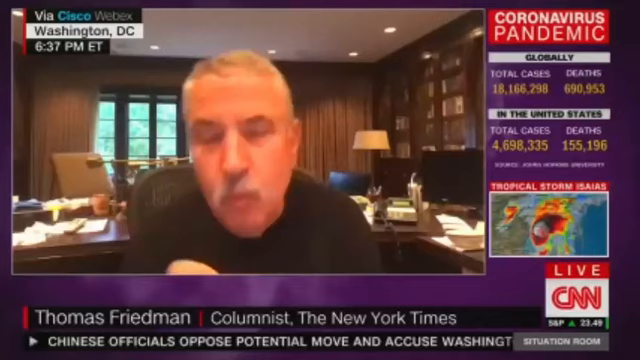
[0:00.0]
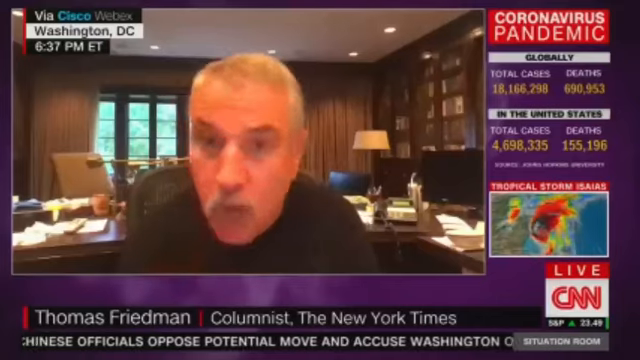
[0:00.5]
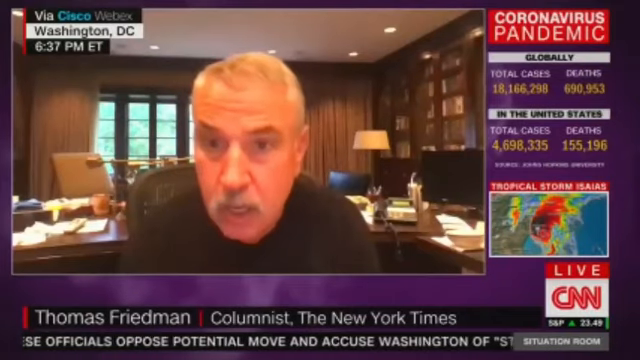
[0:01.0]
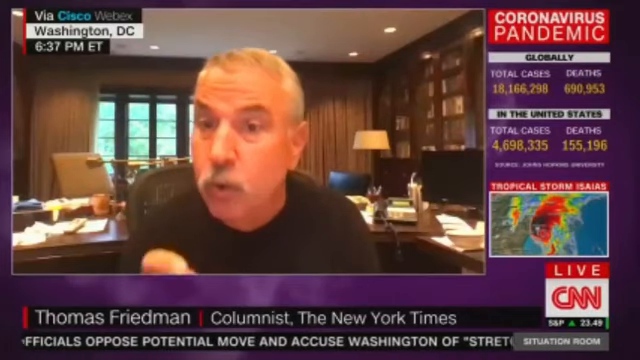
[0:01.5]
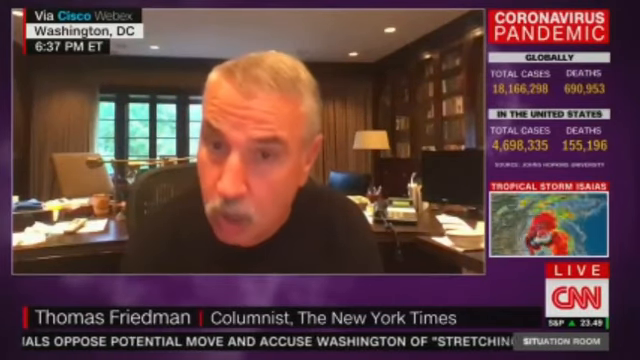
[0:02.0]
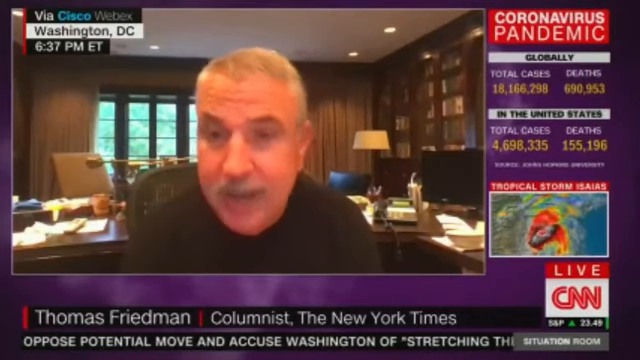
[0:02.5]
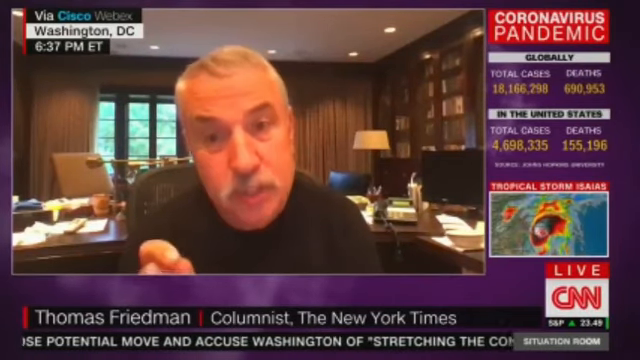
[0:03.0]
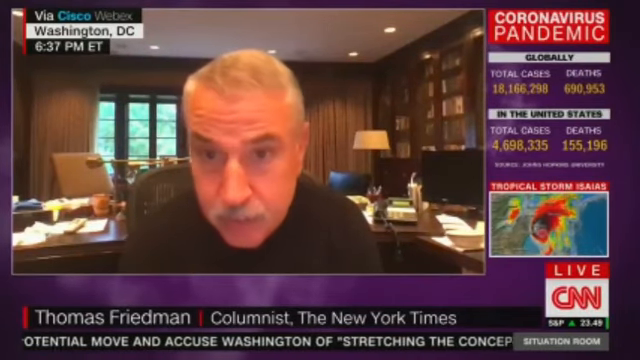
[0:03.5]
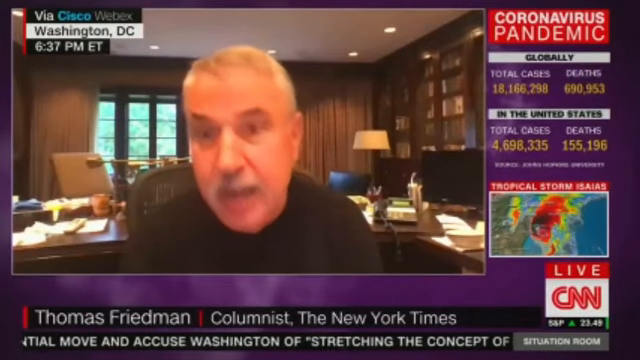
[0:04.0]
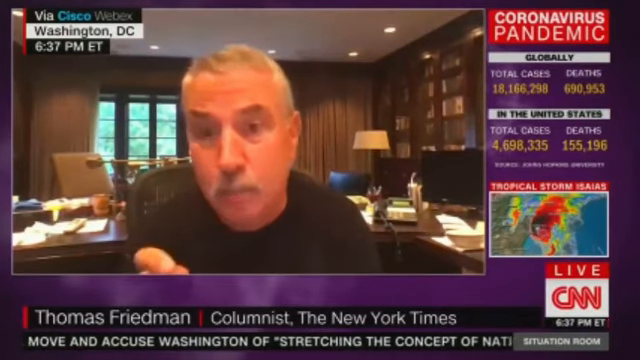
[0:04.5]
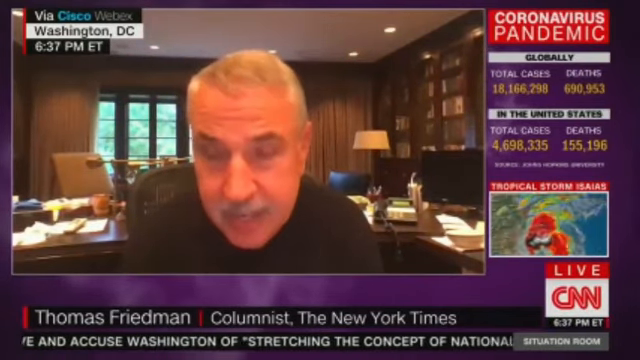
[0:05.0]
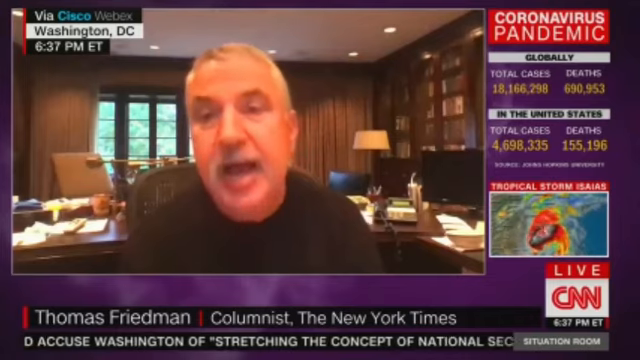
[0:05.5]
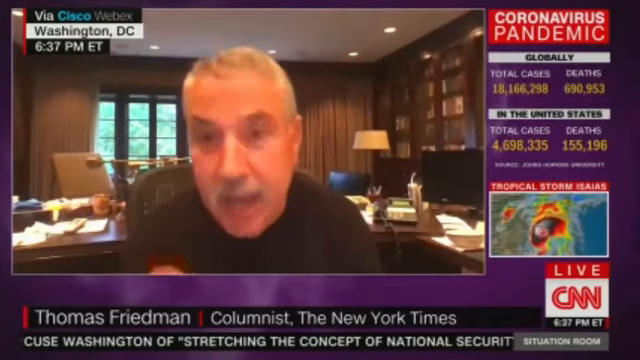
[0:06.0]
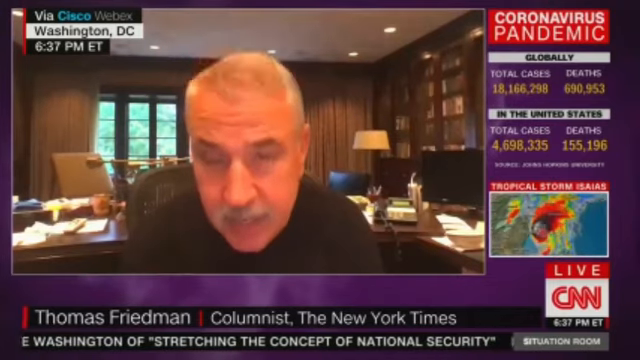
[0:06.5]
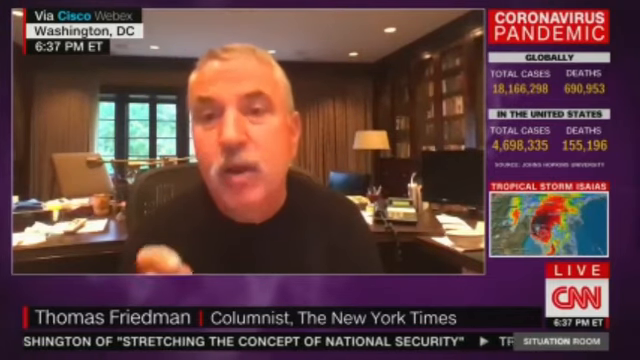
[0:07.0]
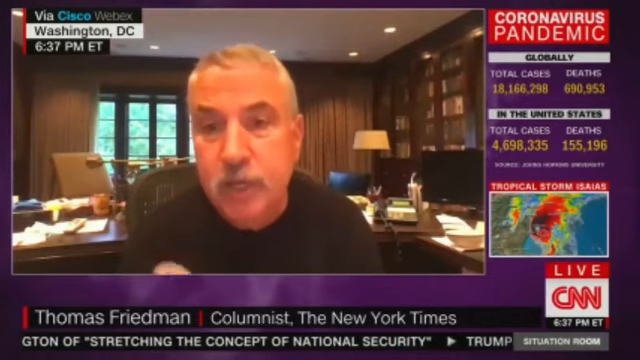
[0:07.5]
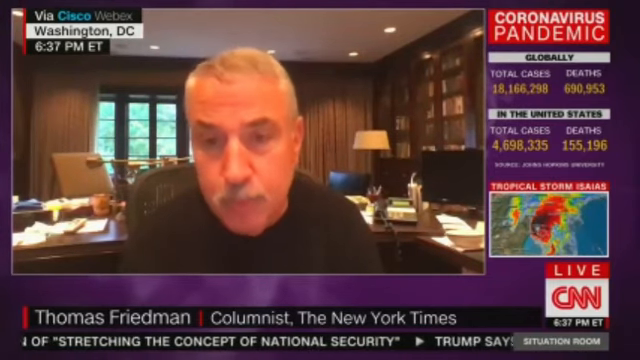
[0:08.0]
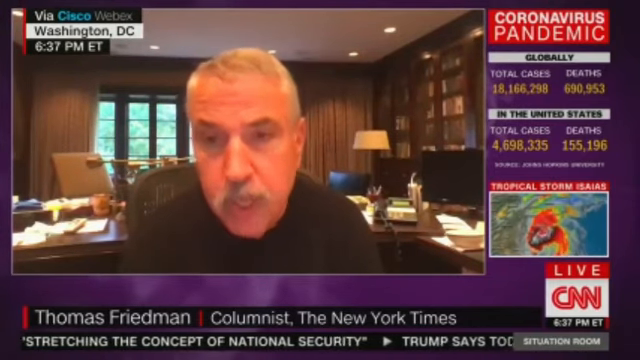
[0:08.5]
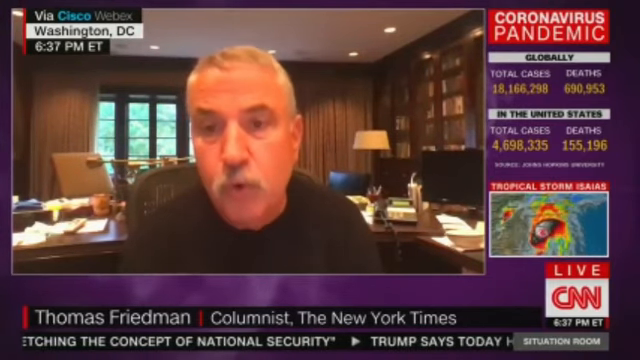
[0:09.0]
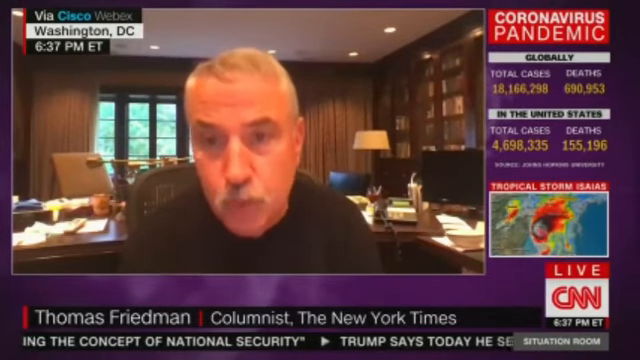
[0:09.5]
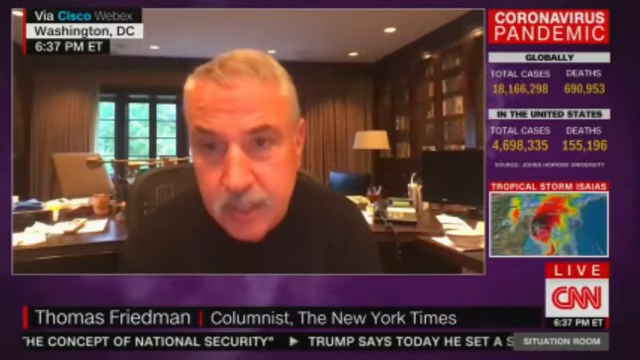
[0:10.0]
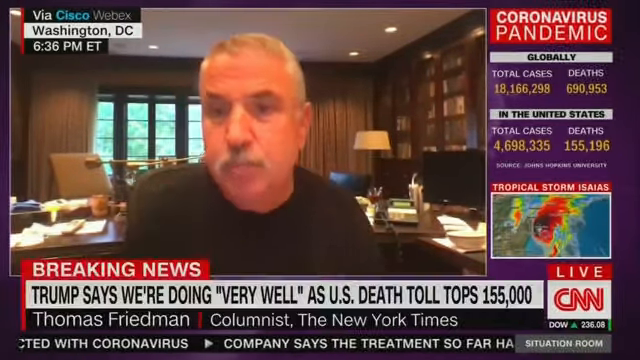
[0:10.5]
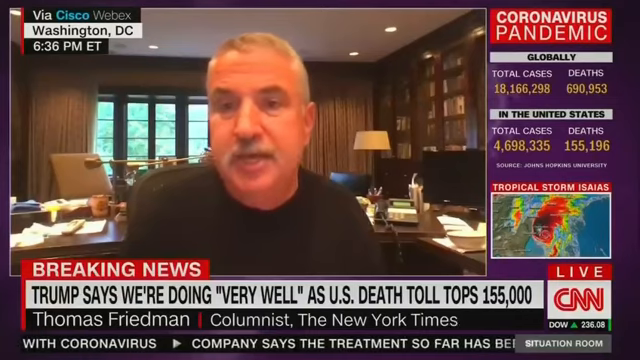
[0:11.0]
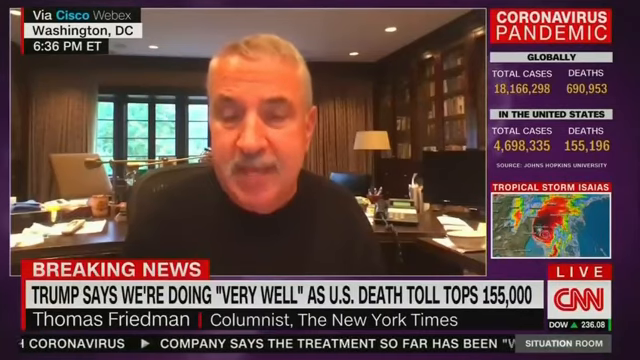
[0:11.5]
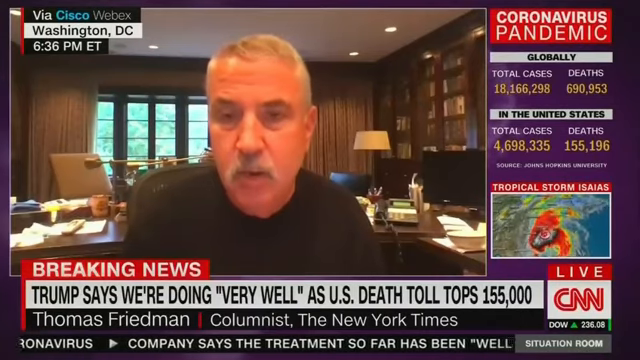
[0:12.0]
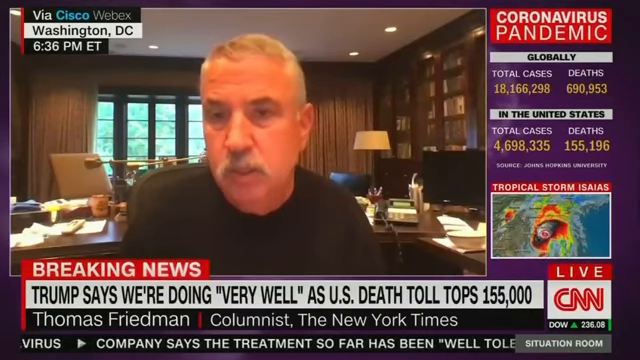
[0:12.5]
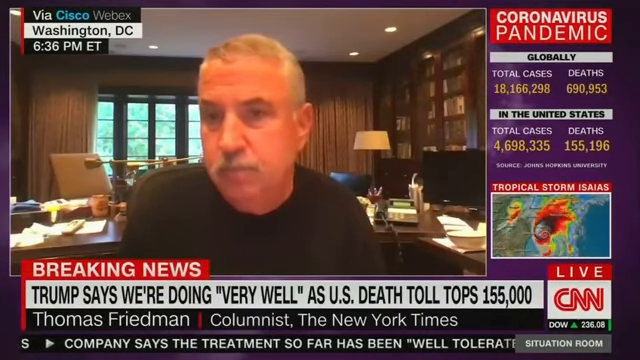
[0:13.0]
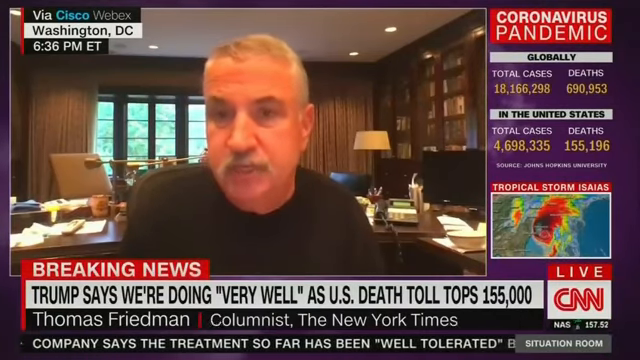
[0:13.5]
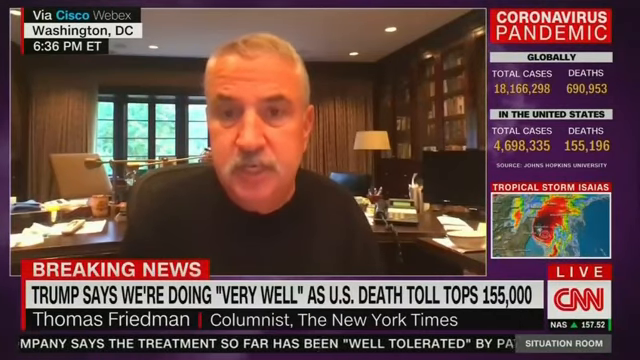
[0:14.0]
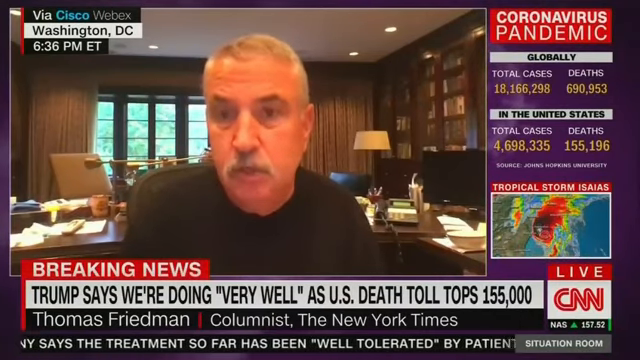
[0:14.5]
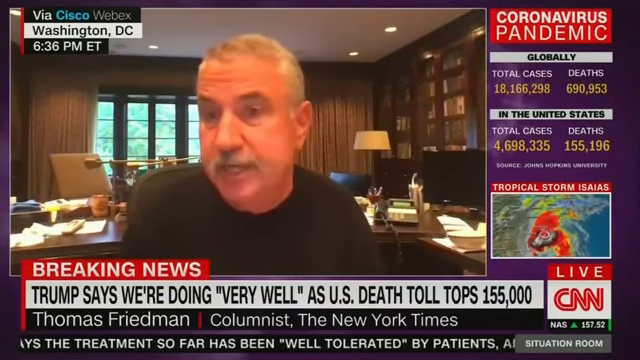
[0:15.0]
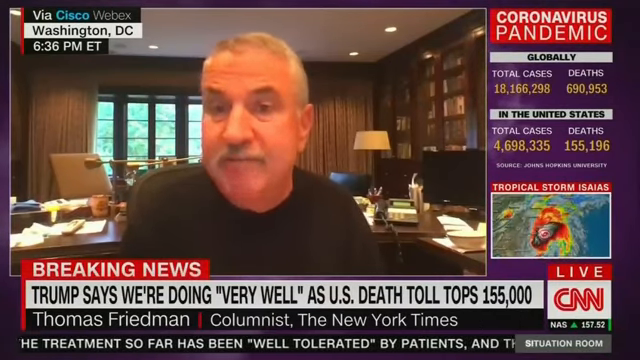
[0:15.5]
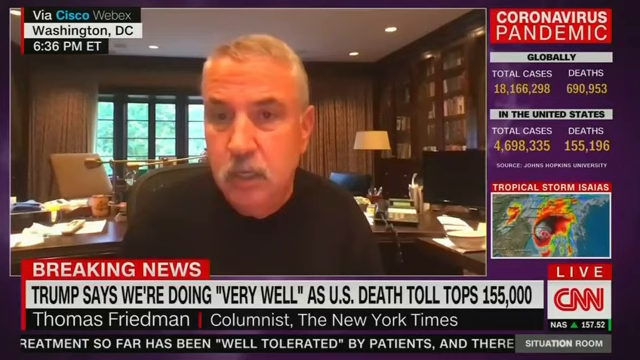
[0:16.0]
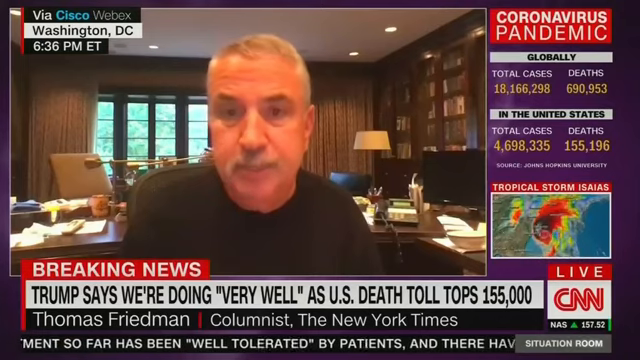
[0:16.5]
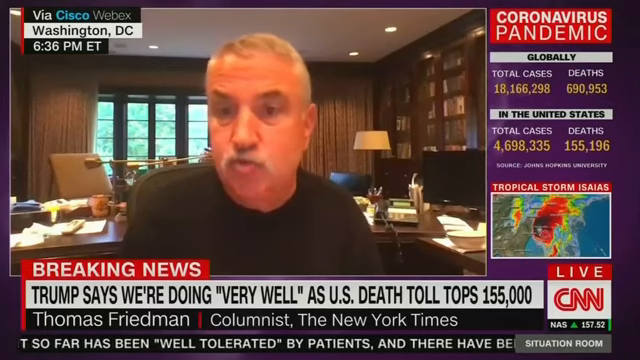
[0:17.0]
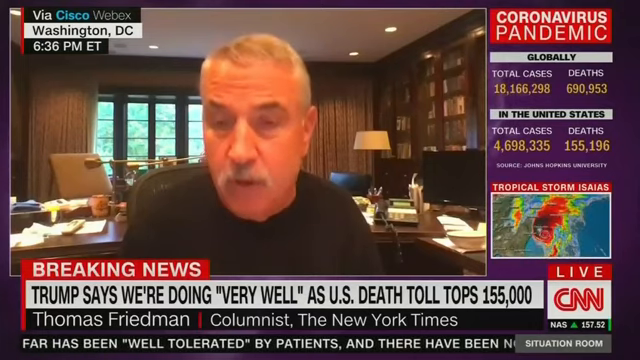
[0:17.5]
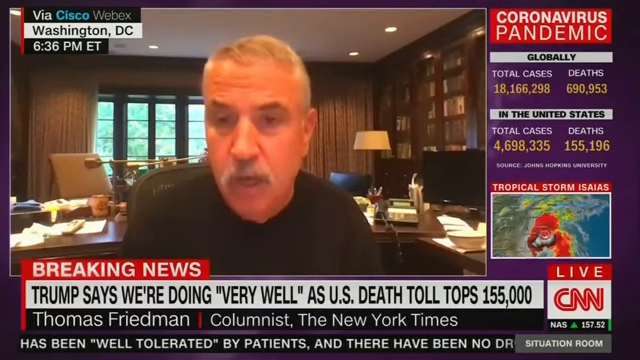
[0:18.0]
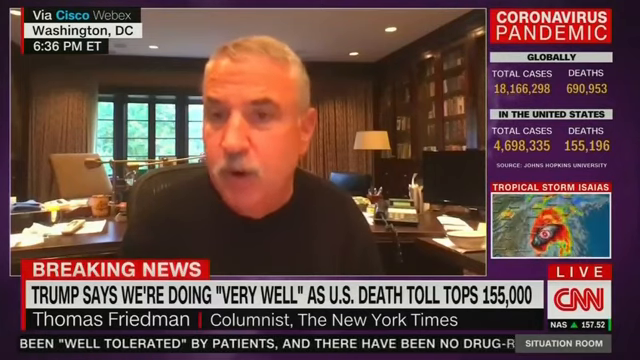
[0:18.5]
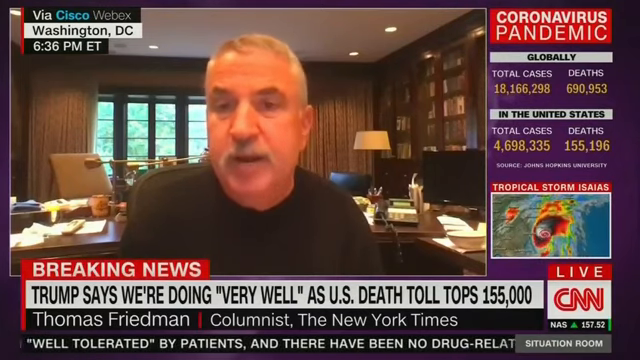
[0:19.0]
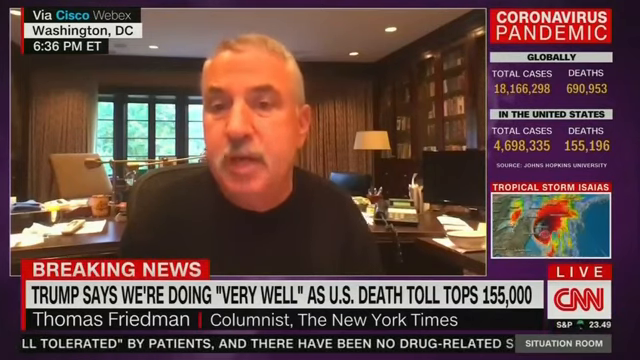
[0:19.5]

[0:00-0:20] A man, maybe in his 40s or 50s, is reporting from Washington DC on CNN. On-screen text reads "coronavirus pandemic globally" with the number of cases, followed by deaths, and cases and deaths in the United States, and there is also a "tropical storm" graphic. He is identified as Thomas Friedman, columnist from the New York Times. A breaking news banner reads "Trump says we're doing very well as U.S. death tolls tops 155,000." He looks like he is sitting in his office, which is a huge office. He wears a black shirt and has a little mustache. He is talking, apparently about the coronavirus.